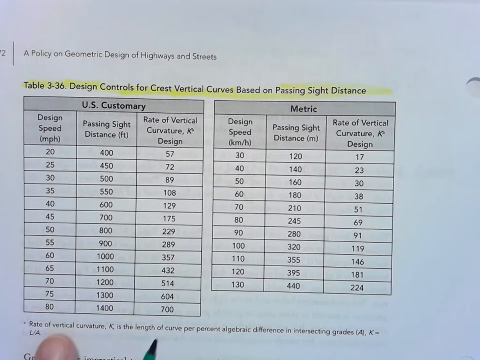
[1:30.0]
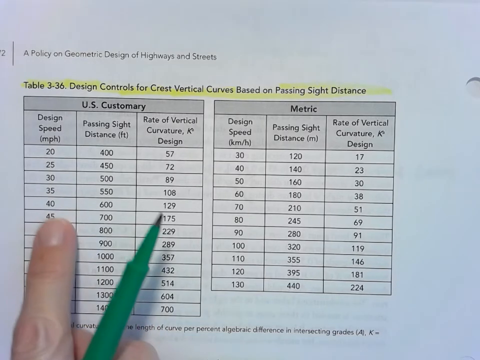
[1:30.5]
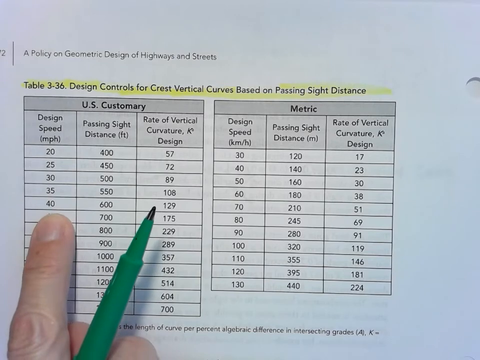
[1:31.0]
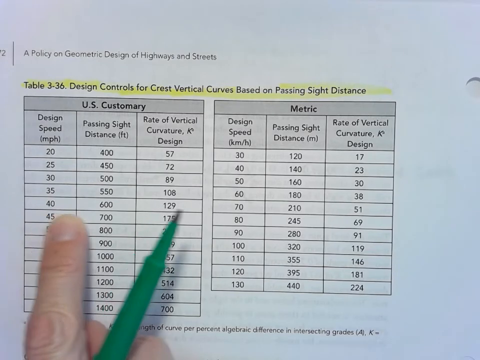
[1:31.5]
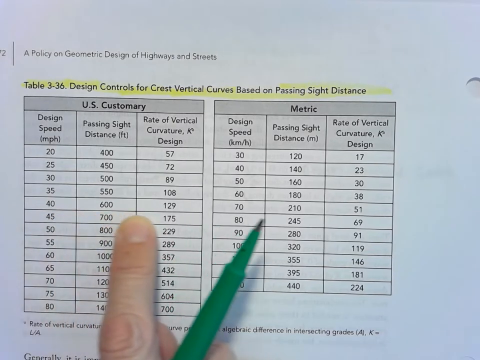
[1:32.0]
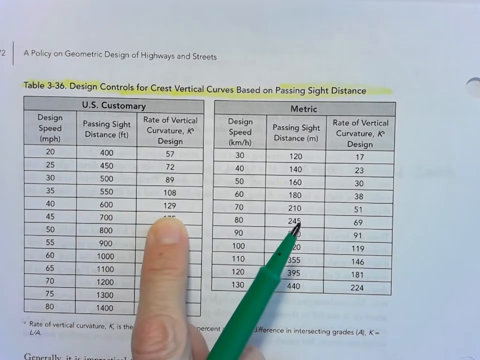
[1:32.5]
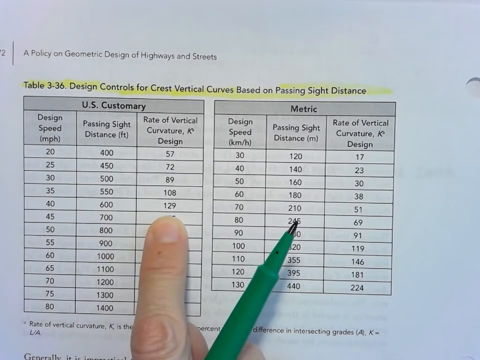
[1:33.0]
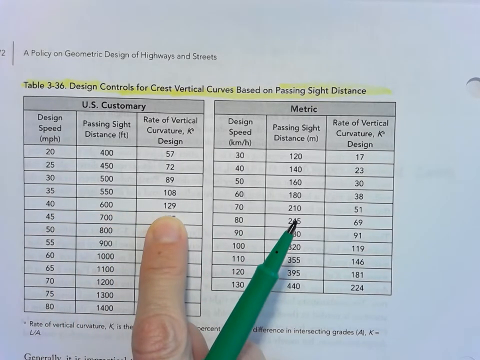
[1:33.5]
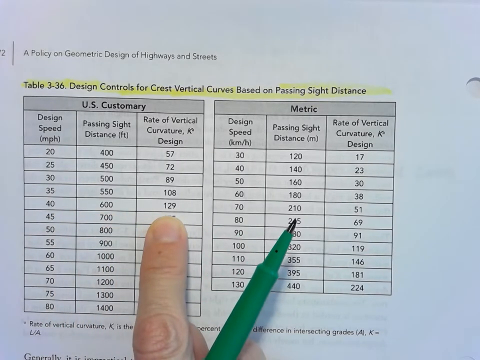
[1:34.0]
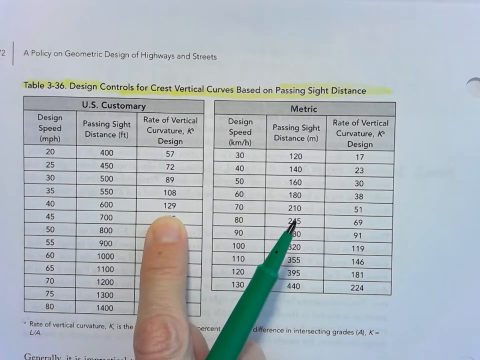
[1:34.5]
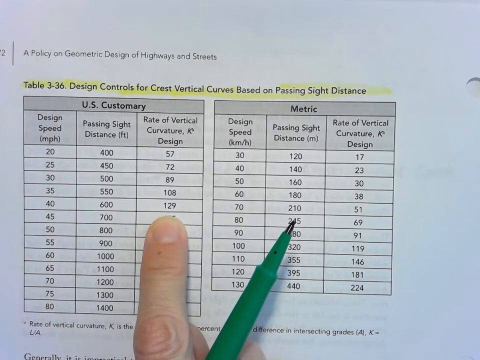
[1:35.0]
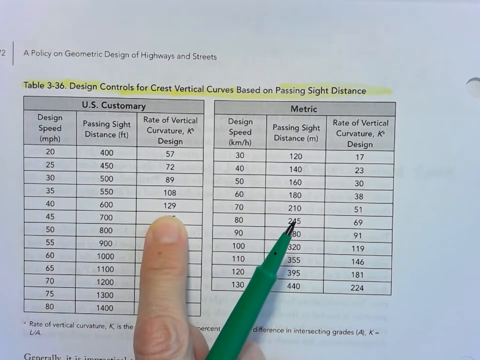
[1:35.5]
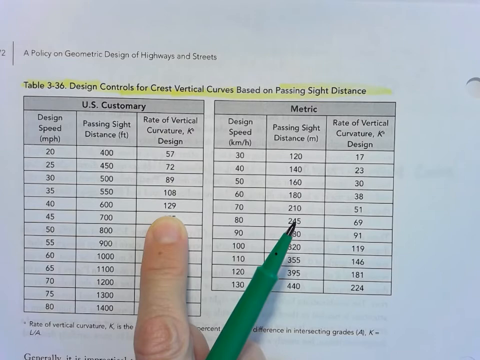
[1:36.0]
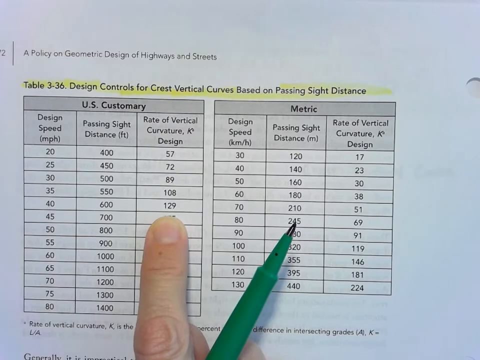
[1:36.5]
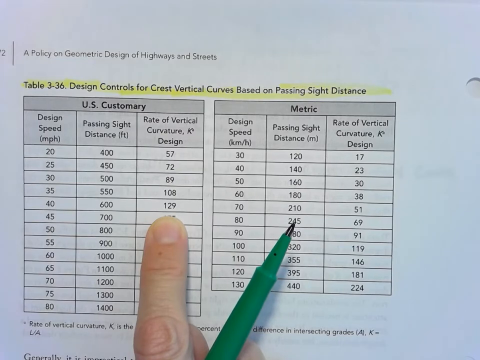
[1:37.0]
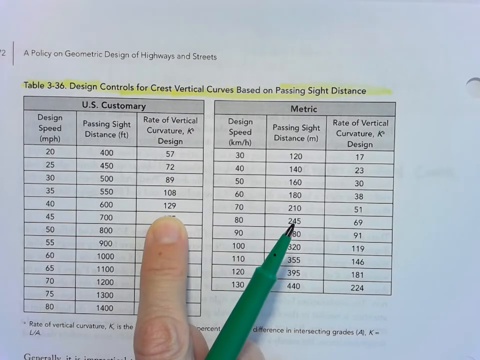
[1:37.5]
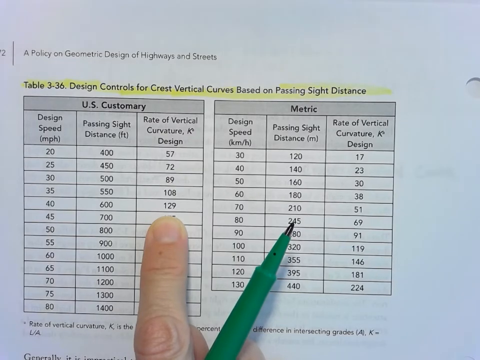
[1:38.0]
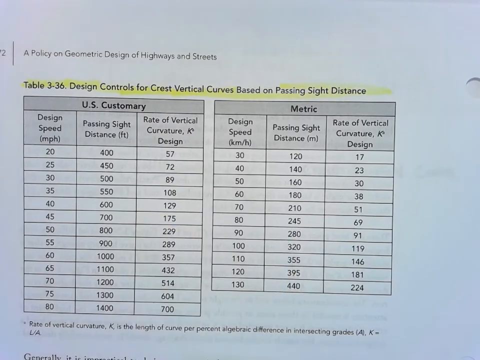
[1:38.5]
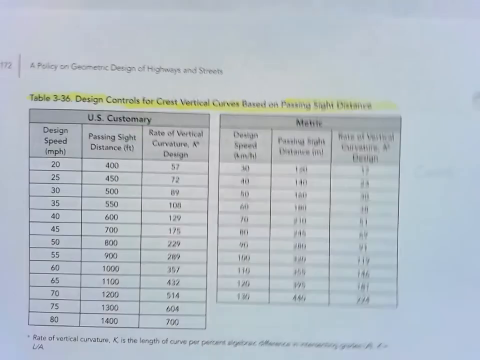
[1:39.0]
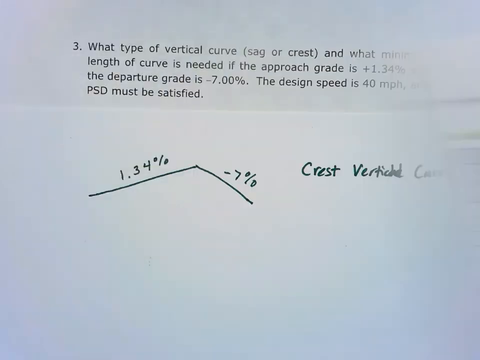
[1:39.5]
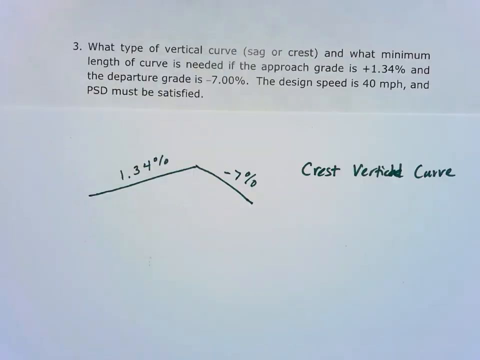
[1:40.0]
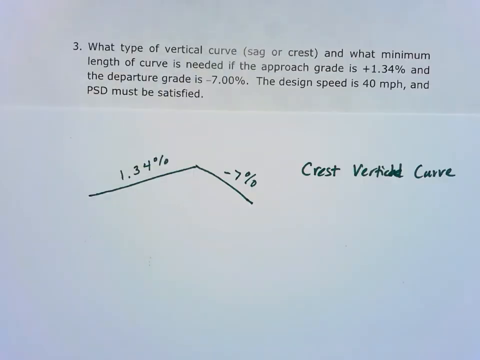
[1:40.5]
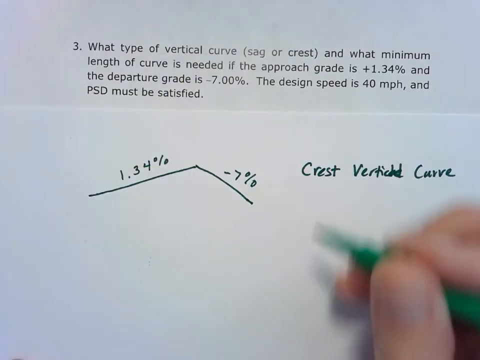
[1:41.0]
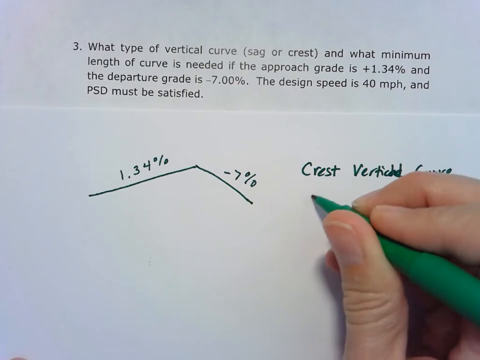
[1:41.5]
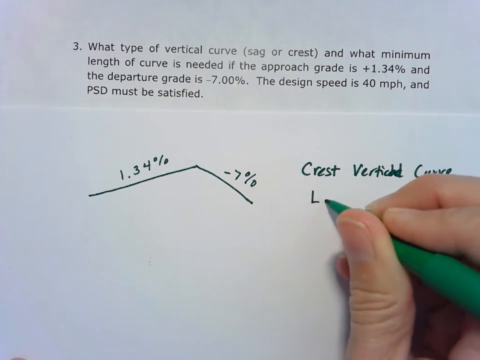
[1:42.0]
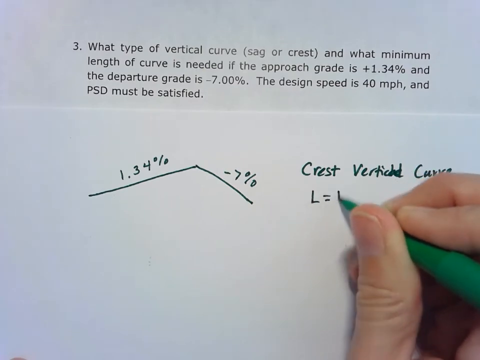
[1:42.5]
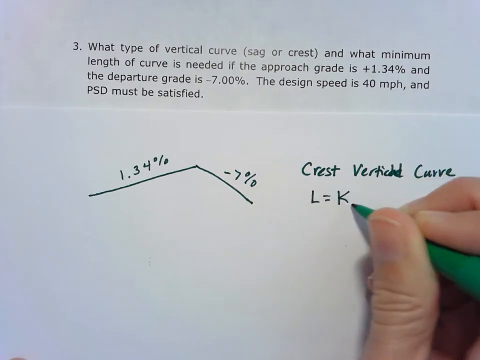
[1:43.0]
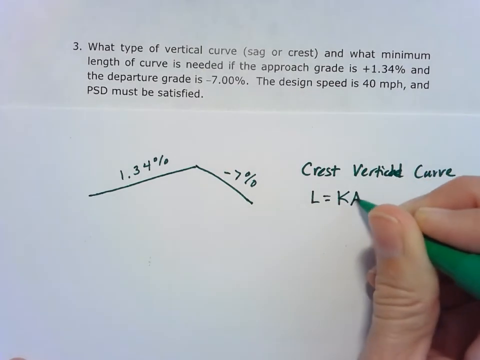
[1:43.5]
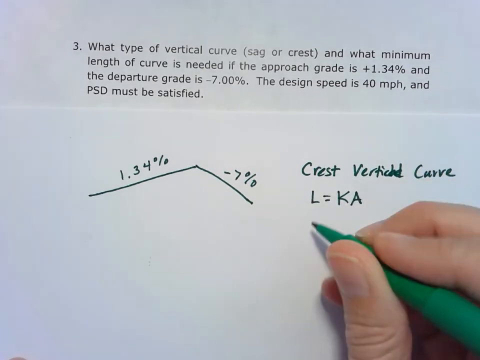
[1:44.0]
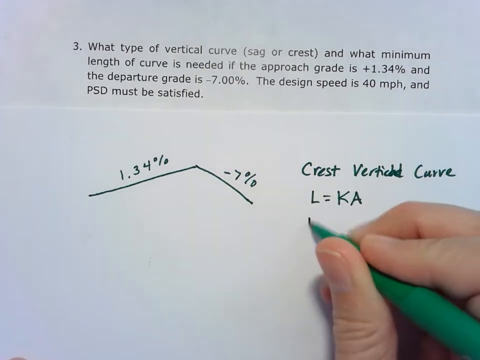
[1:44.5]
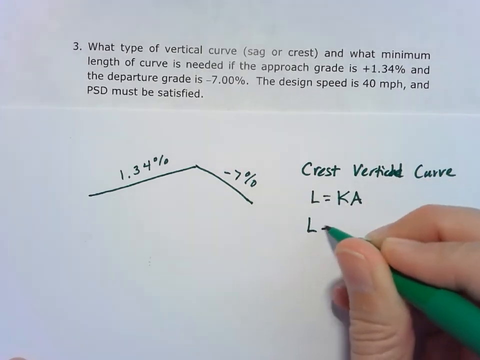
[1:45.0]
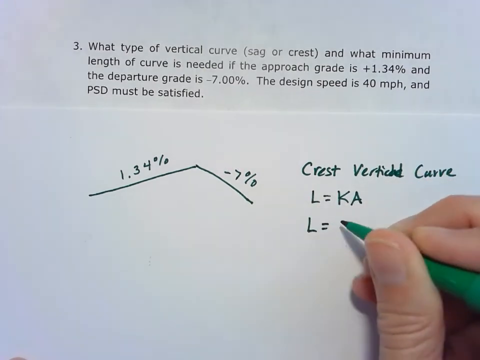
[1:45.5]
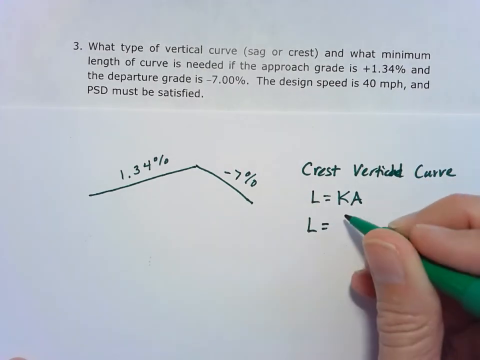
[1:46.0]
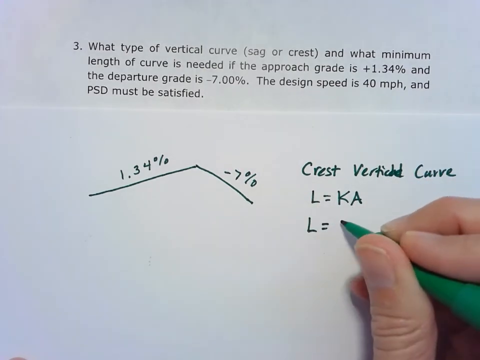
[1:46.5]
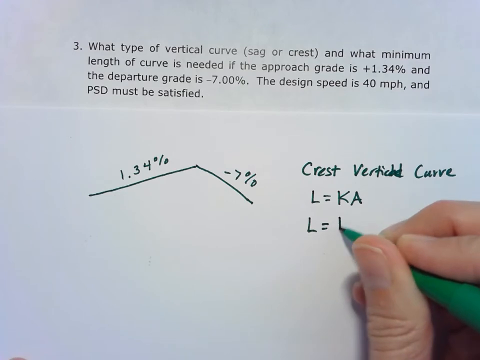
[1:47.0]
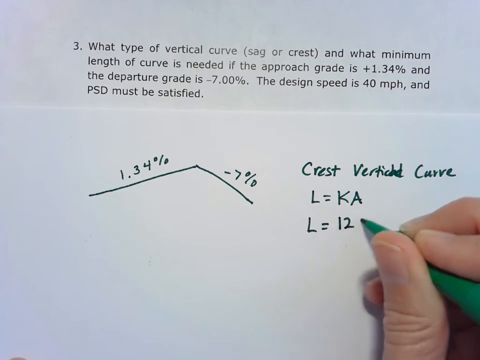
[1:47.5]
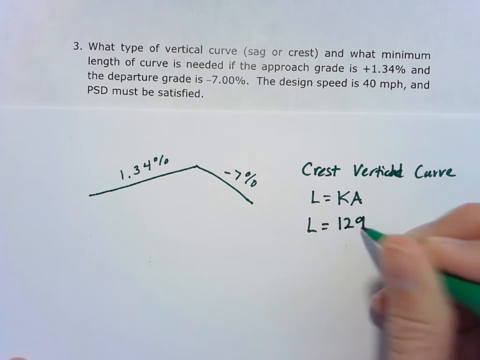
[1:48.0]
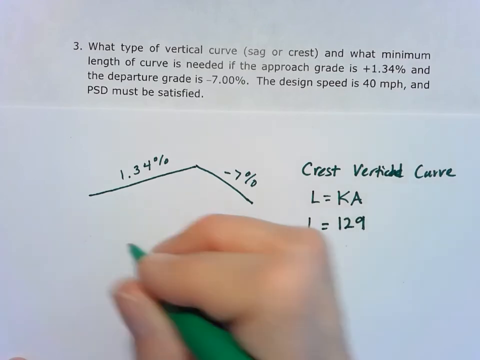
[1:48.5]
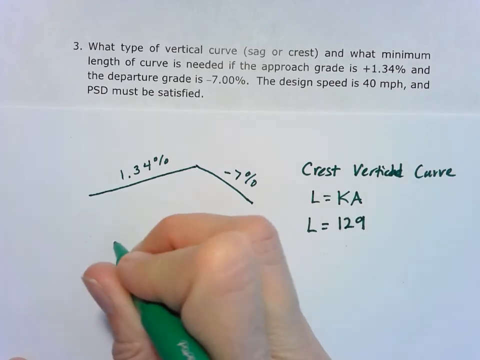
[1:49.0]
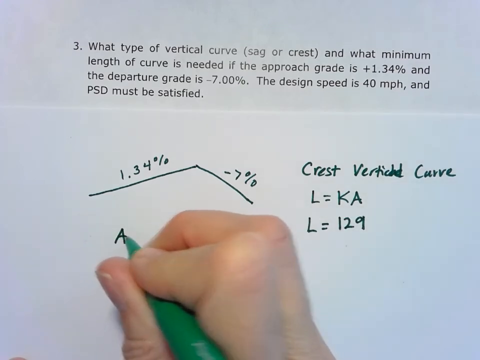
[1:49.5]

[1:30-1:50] An index finger points on the US customary side to the design speed of 40 and runs along the row to 129 under the rate of vertical curvature column, the value that goes on the answer sheet. The tip of the green pen is visible because it is held in the same hand. The view scrolls from left to right. The video then goes back to the answer sheet, where under the words "Crest Vertical Curve" the hand writes "L = KA", then on a new line "L = 129", and is about to write something under the two-line diagram drawn earlier, in answer to the question at the top of the page.